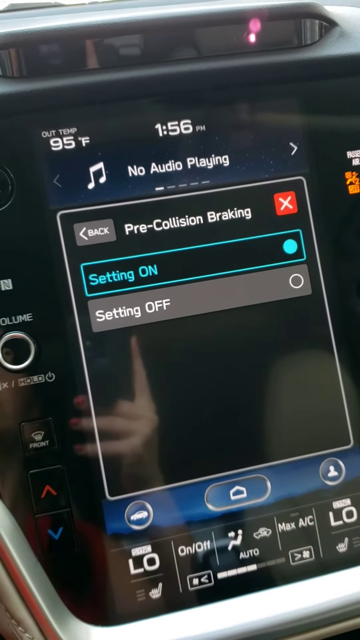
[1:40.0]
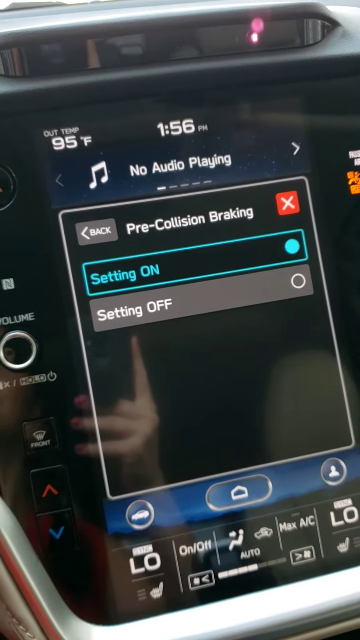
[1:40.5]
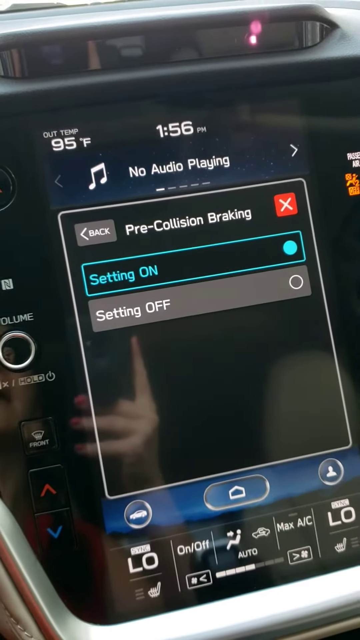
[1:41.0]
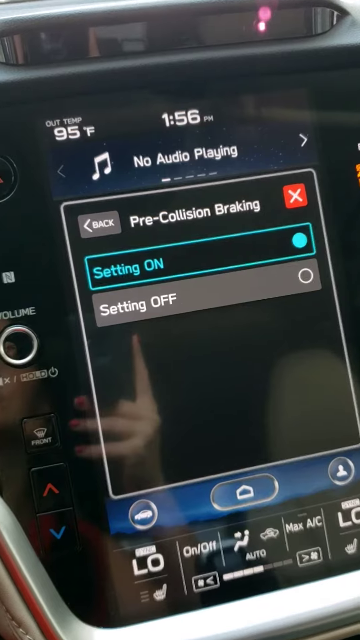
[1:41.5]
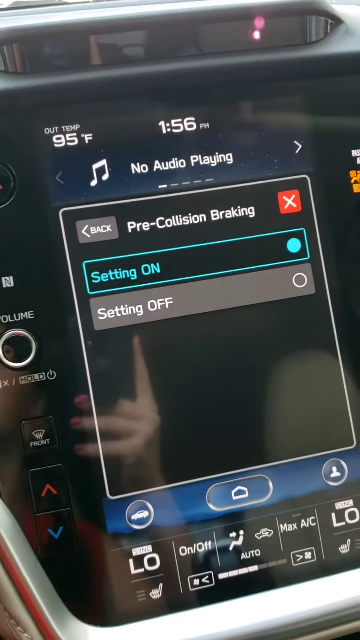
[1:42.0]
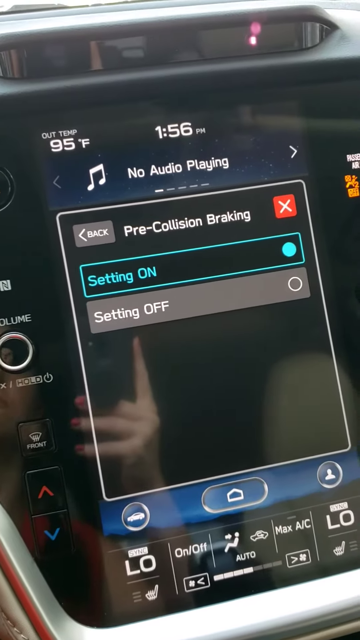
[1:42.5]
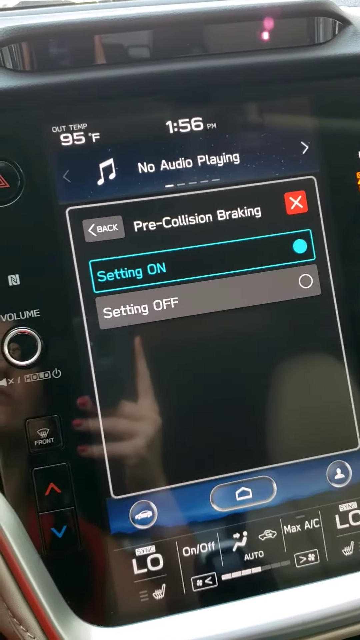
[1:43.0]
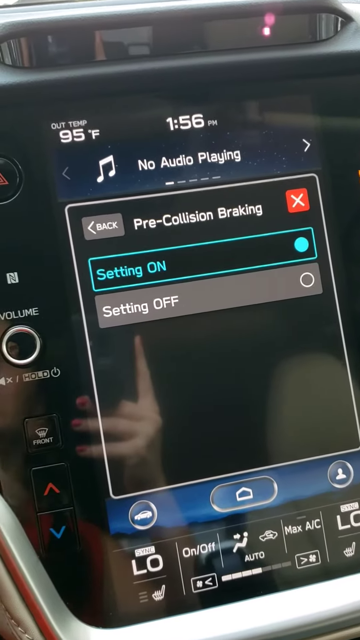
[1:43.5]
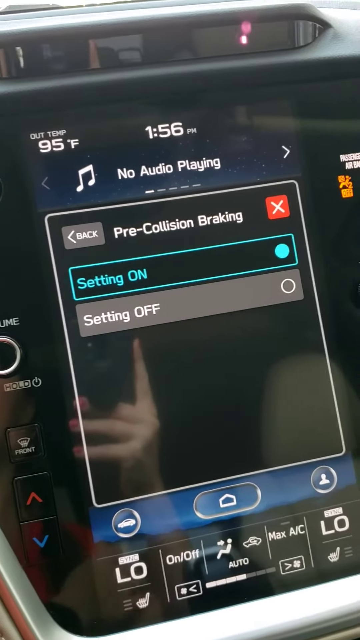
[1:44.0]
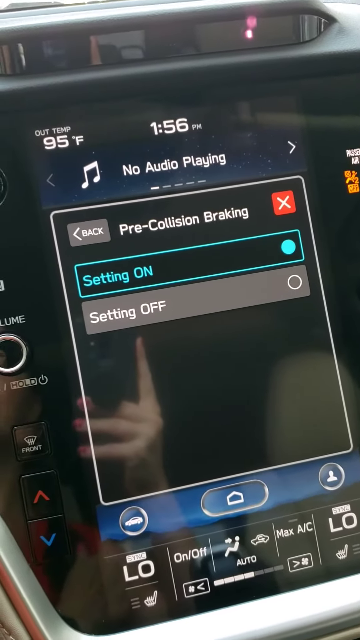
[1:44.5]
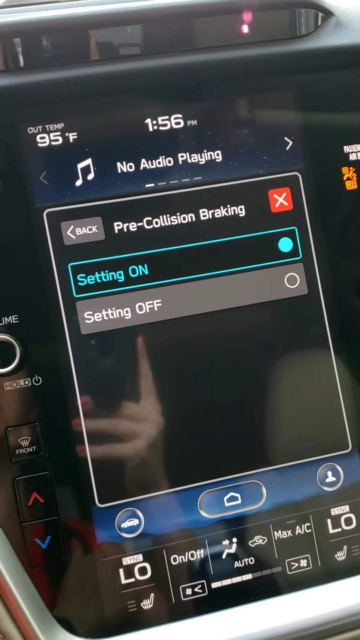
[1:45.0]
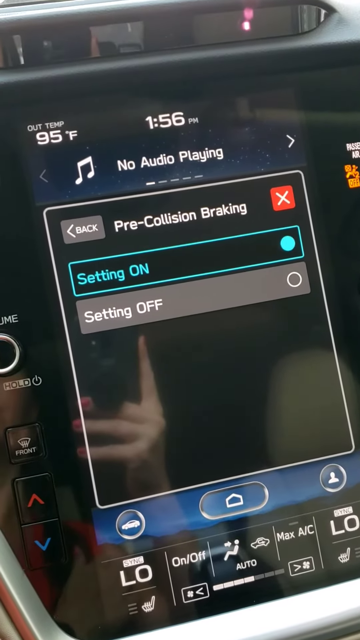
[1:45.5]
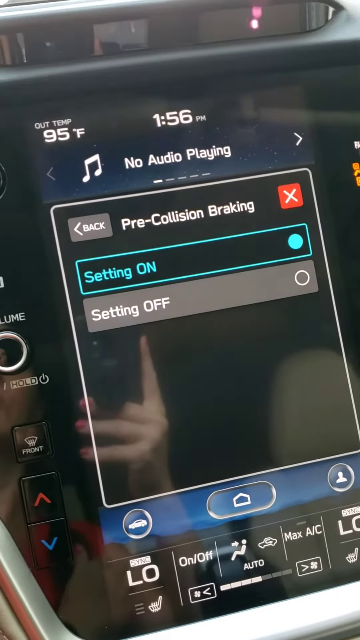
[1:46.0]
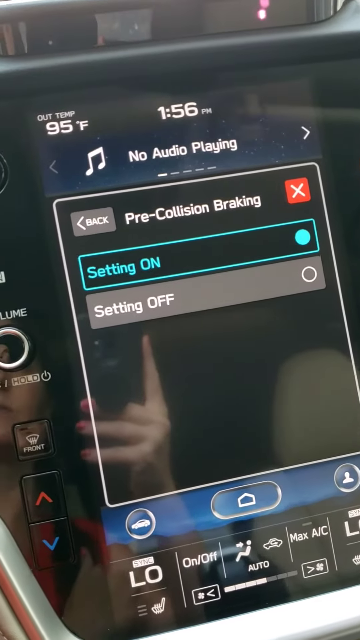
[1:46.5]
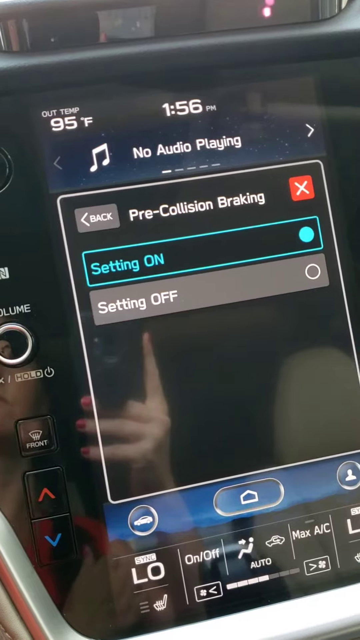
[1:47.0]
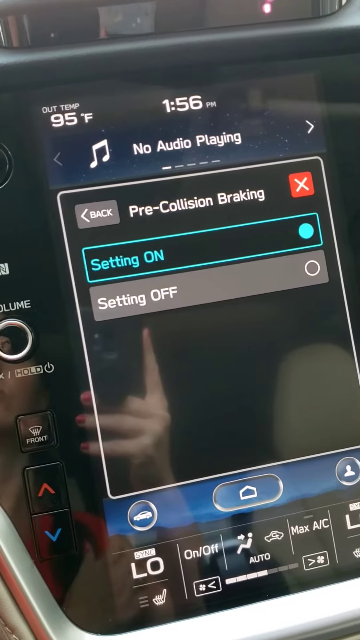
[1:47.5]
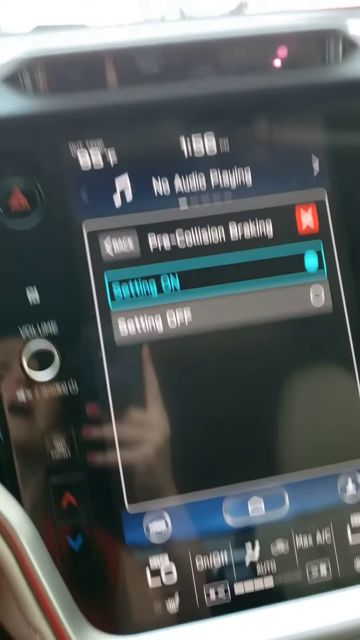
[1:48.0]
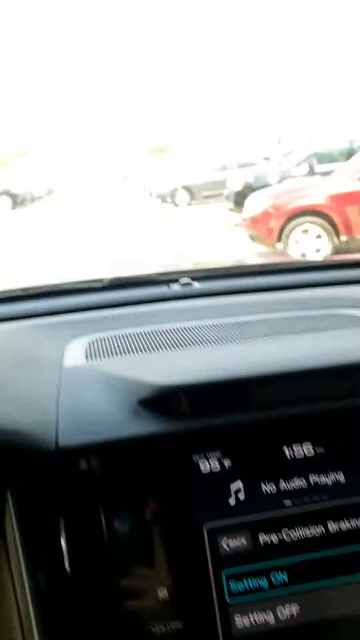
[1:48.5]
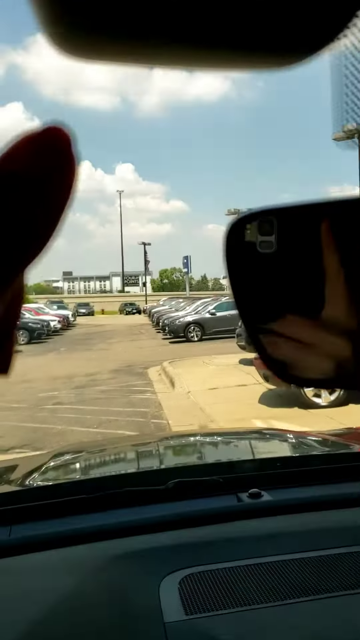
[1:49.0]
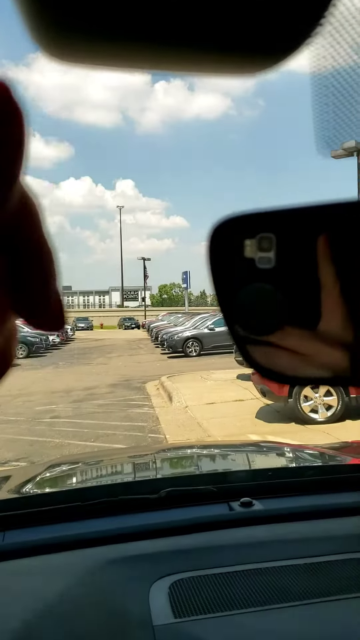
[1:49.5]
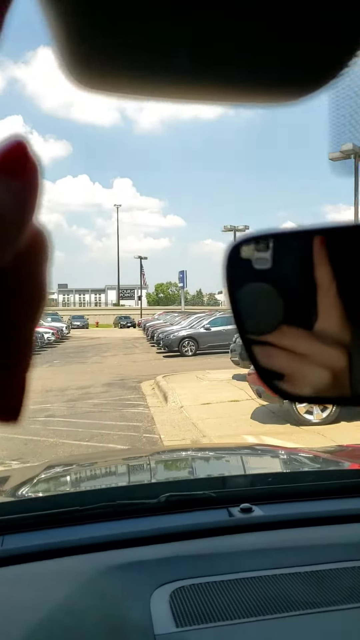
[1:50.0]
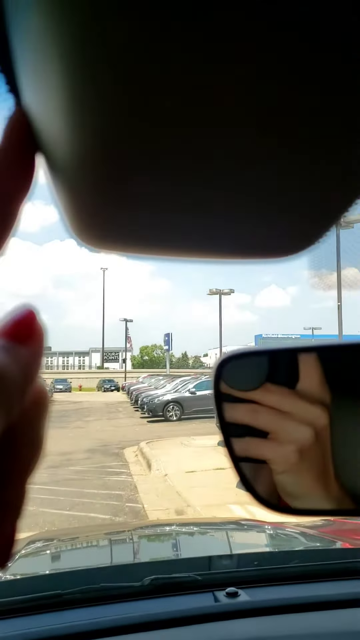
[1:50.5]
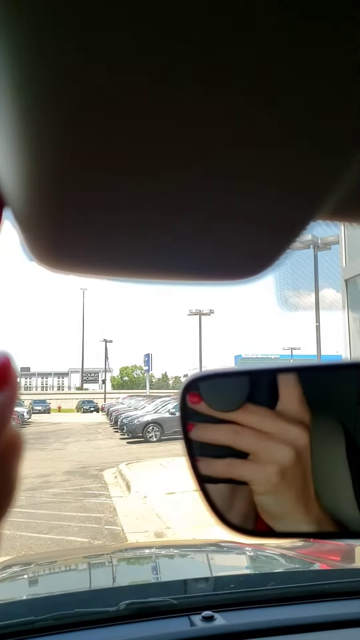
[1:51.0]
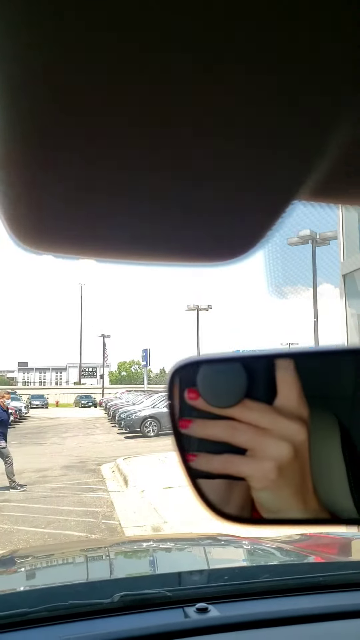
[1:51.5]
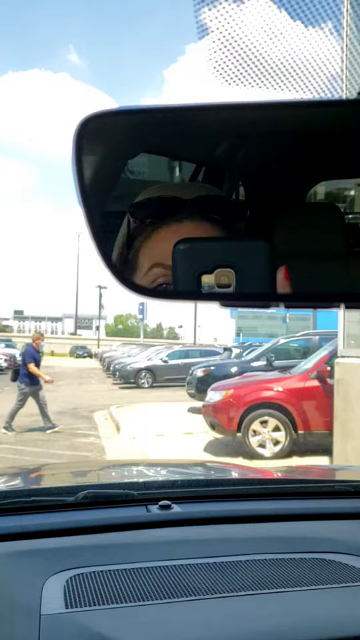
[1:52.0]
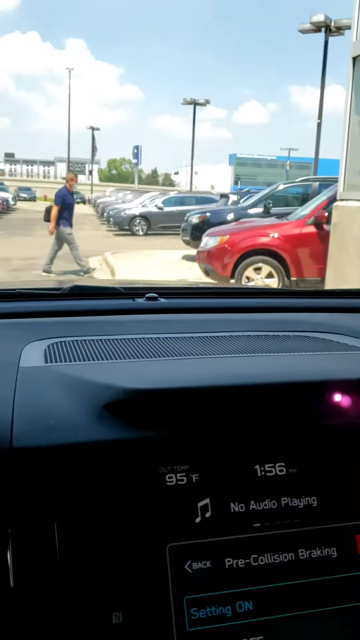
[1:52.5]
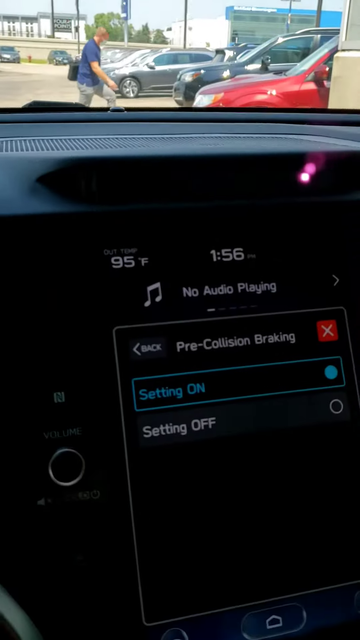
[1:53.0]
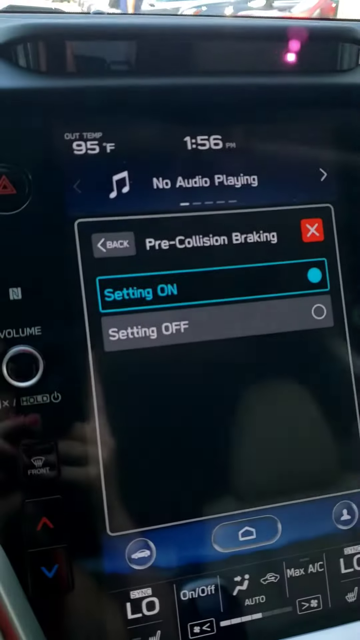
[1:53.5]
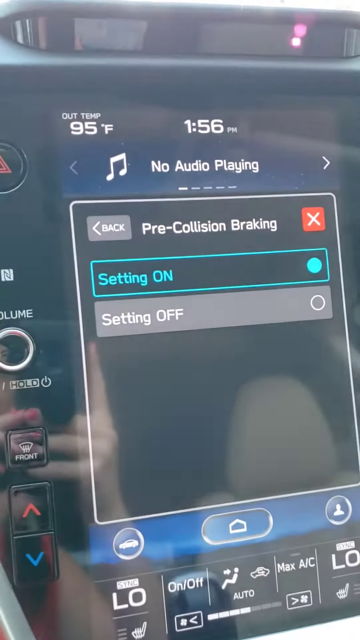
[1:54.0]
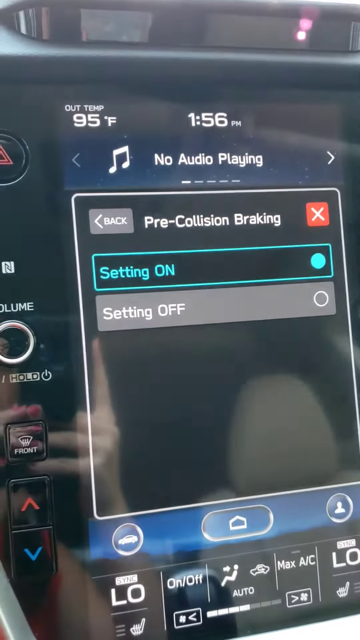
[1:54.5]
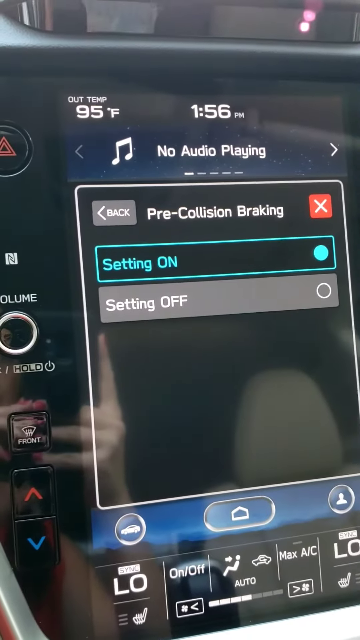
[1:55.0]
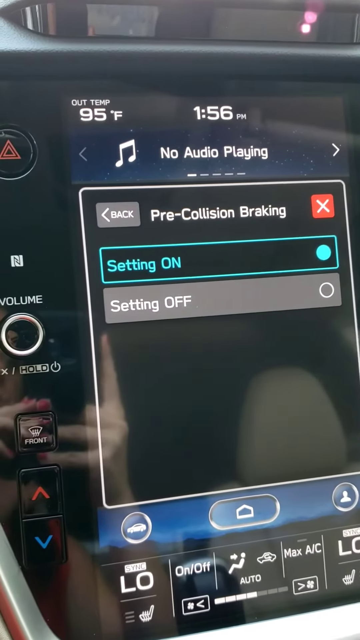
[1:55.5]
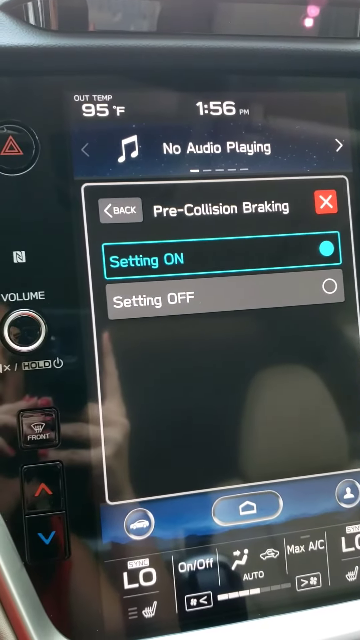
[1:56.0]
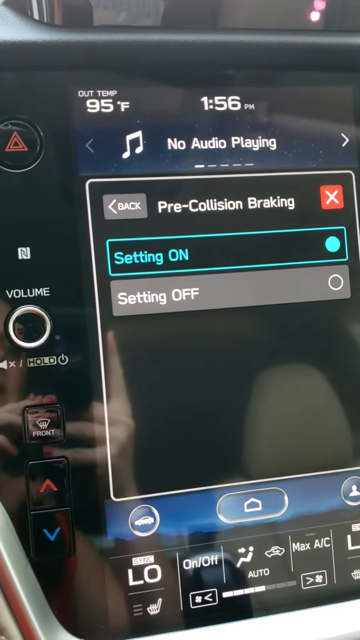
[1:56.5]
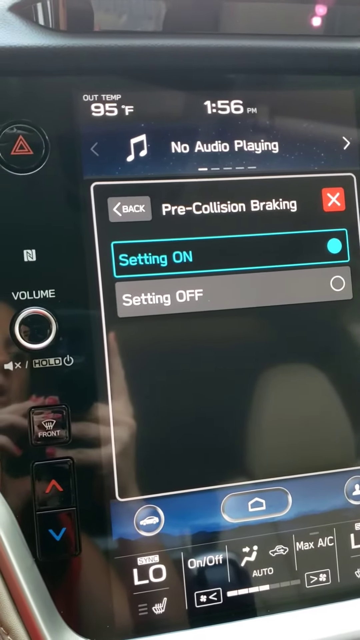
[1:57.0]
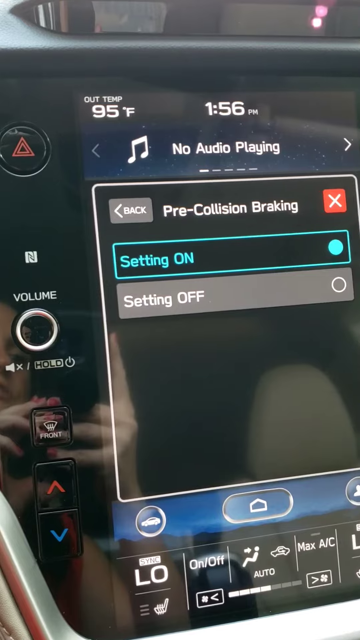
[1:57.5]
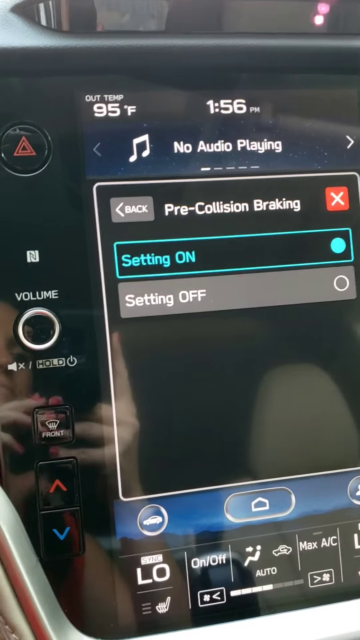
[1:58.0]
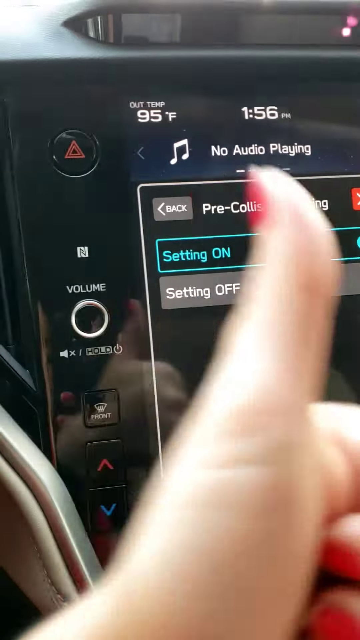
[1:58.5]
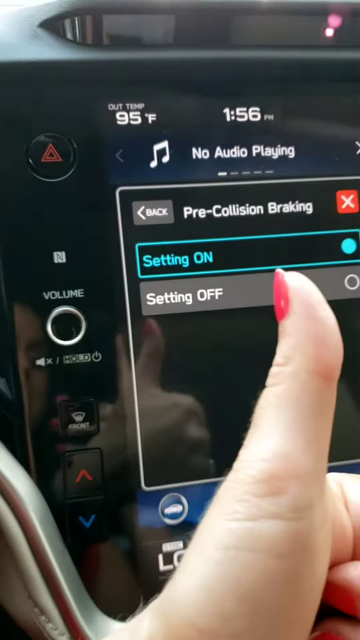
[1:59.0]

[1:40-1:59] A woman in a car chooses options on the car's touchscreen. She looks up for a moment as a man walks past her car in a parking lot, possibly a dealership, where a number of cars are parked in two rows, all facing the same way. She goes back to setting her screen. Holding something in her hand, she gives a thumbs up. She has pink nail polish and has been looking through options. The screen reads "car," and what it is changing is visible in the middle of the console dashboard. She shows a little of the area around the car, and at times her reflection is visible in the screen, which she adjusts continuously.